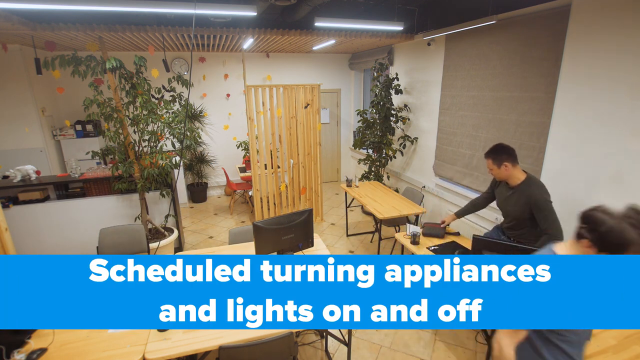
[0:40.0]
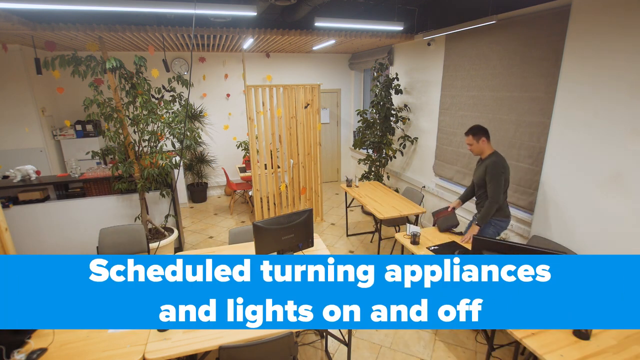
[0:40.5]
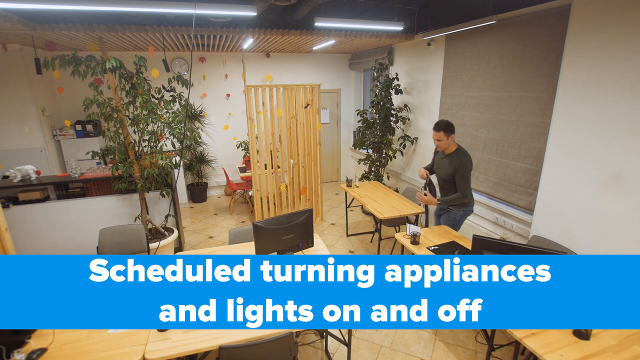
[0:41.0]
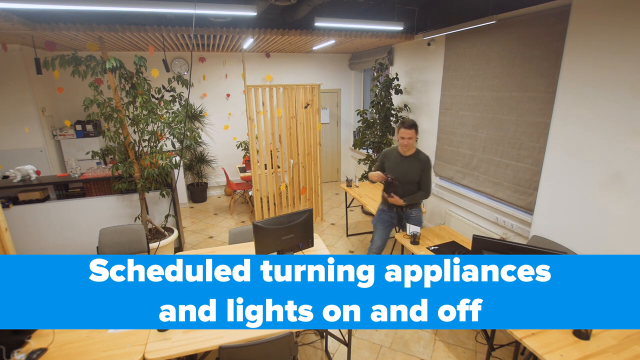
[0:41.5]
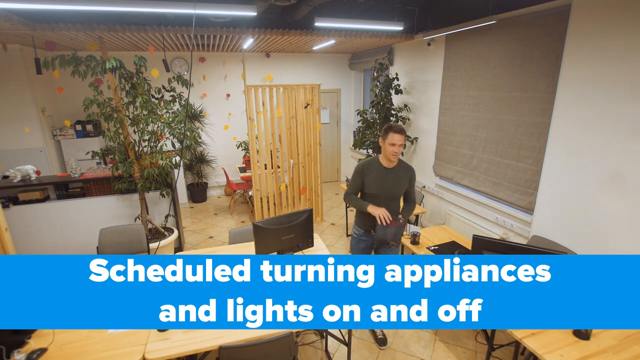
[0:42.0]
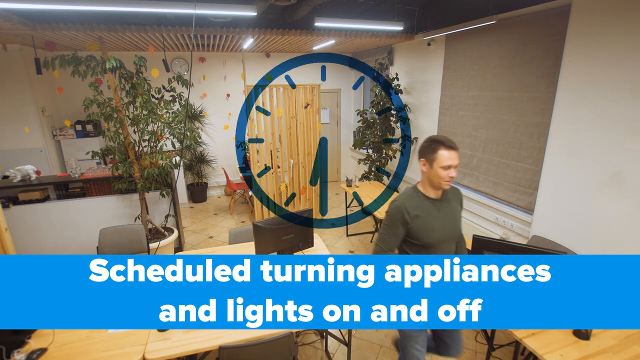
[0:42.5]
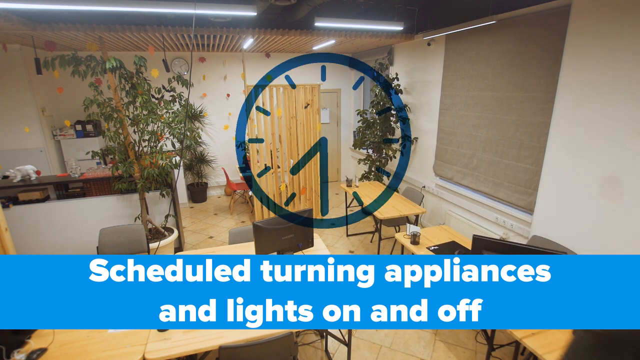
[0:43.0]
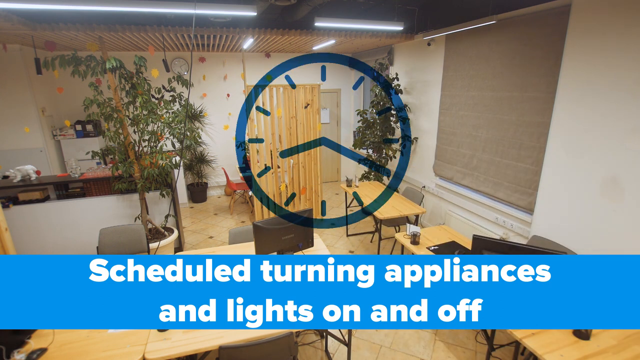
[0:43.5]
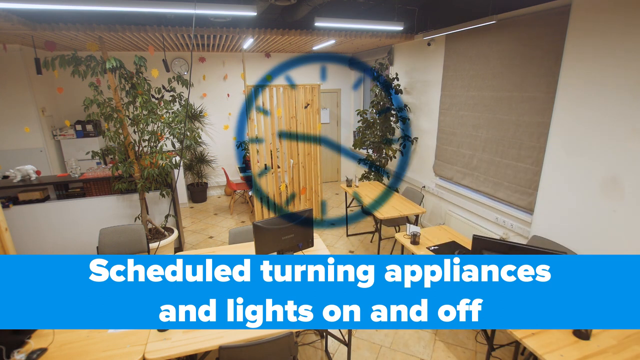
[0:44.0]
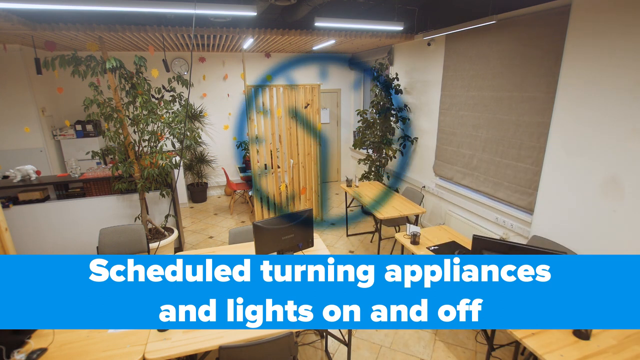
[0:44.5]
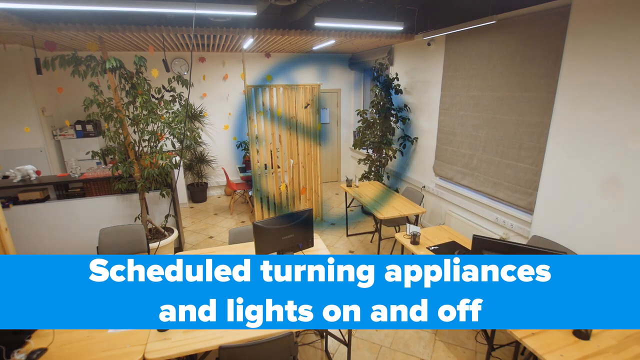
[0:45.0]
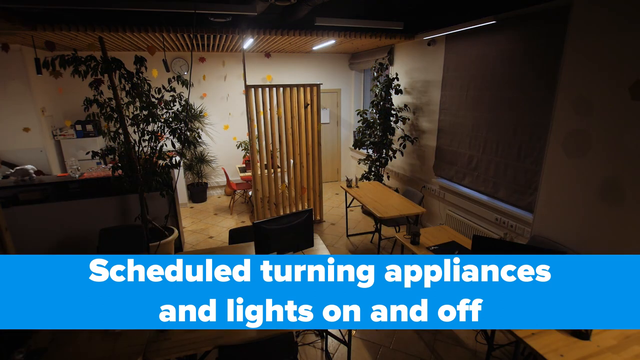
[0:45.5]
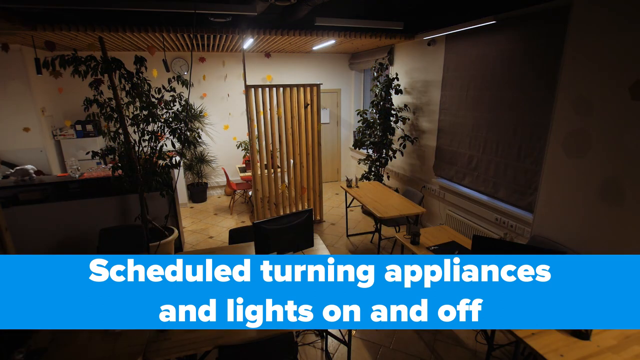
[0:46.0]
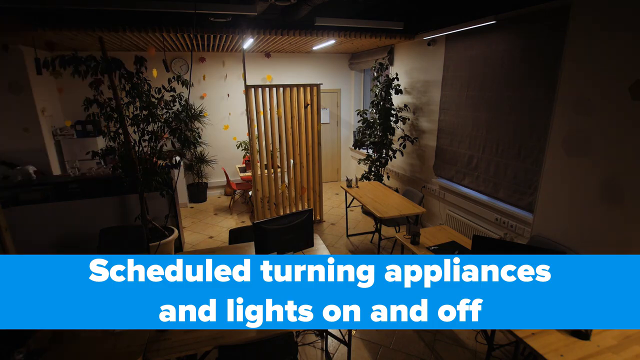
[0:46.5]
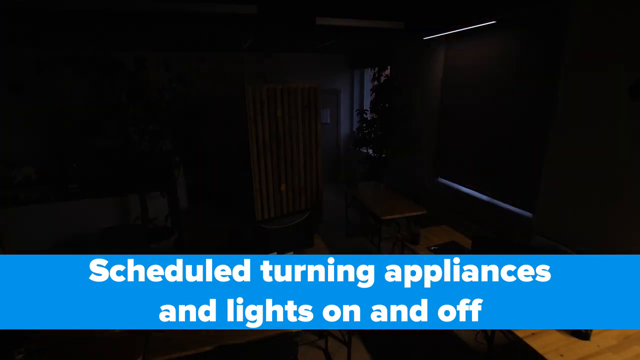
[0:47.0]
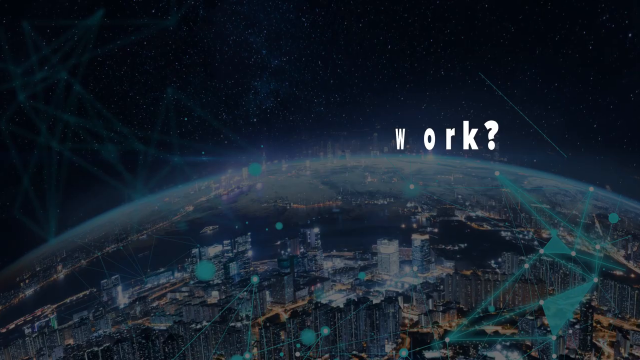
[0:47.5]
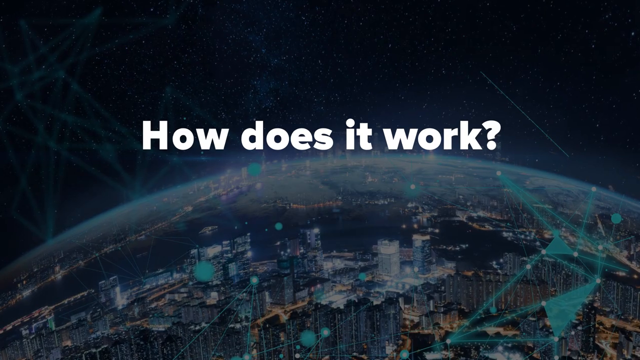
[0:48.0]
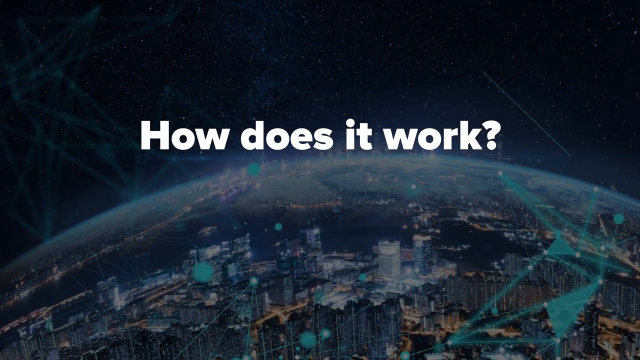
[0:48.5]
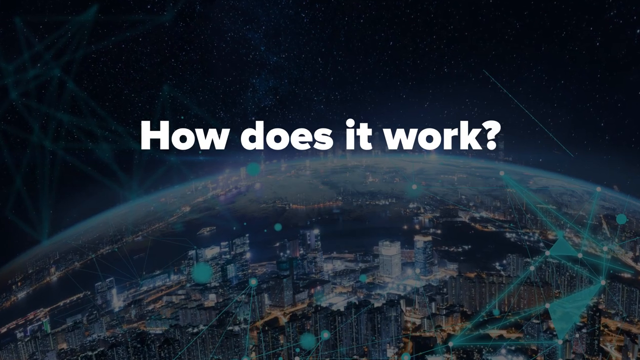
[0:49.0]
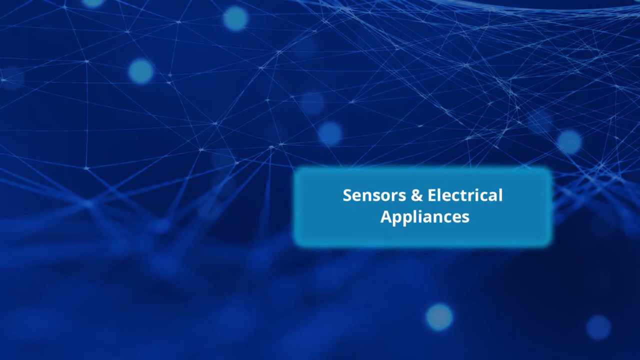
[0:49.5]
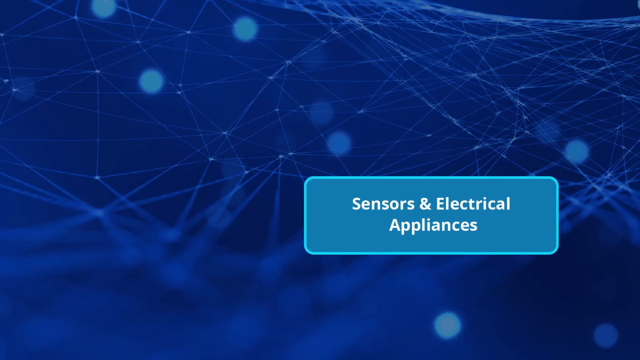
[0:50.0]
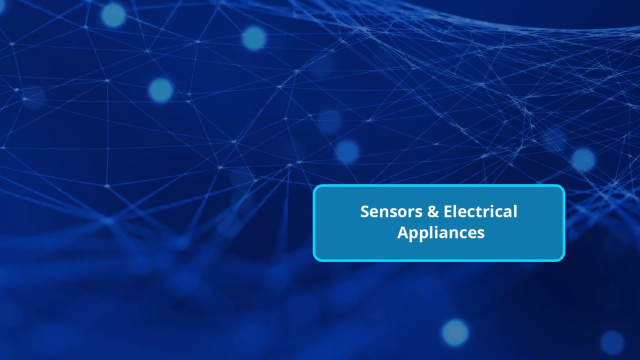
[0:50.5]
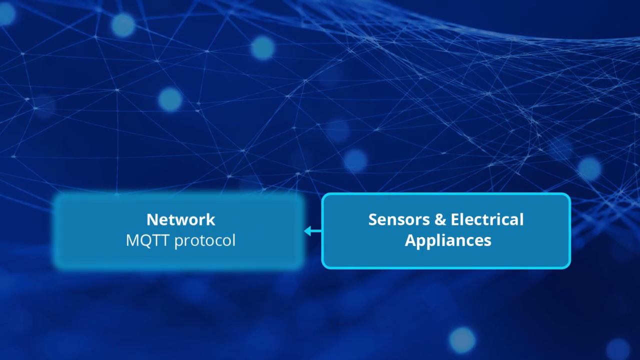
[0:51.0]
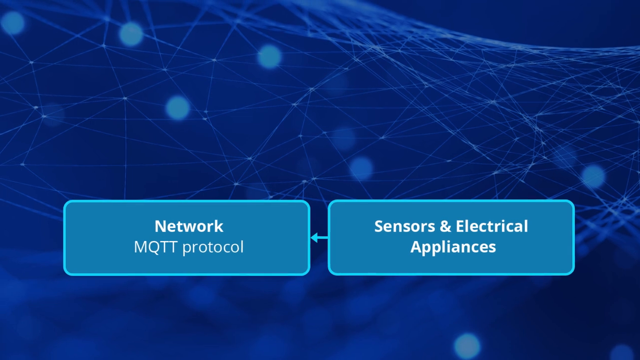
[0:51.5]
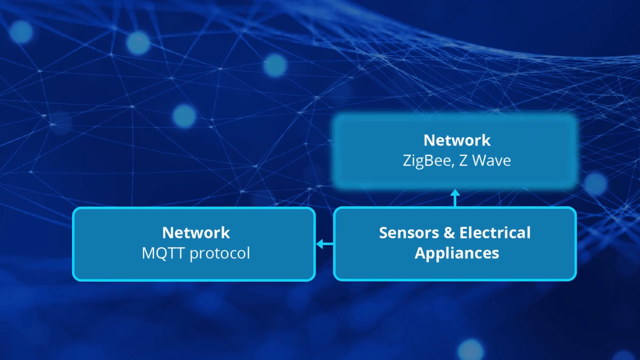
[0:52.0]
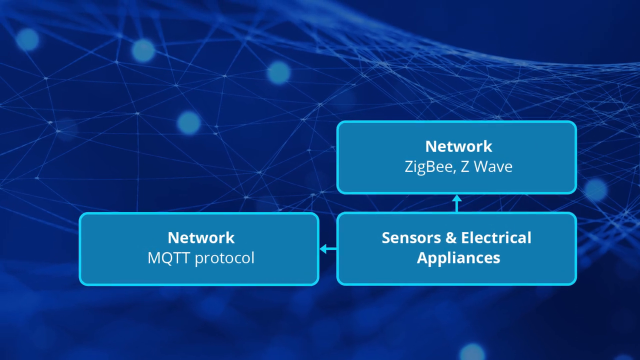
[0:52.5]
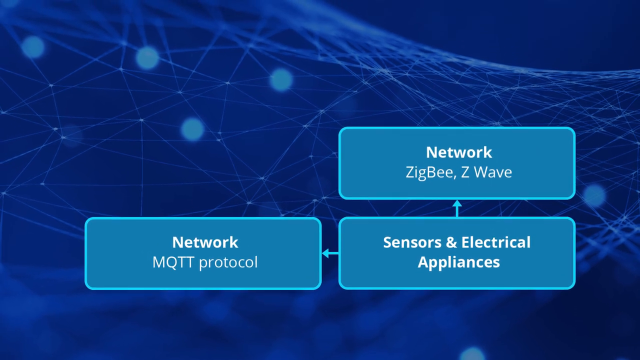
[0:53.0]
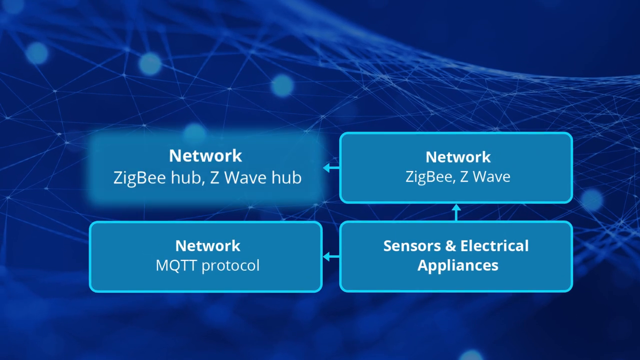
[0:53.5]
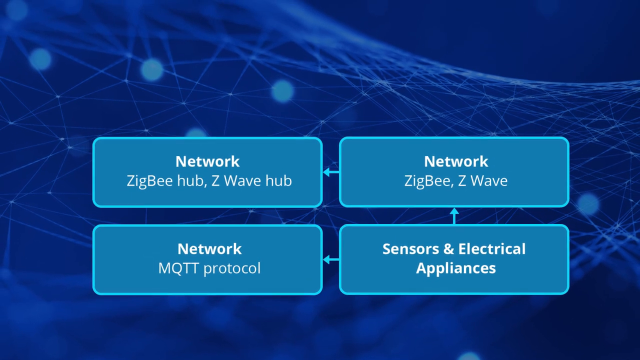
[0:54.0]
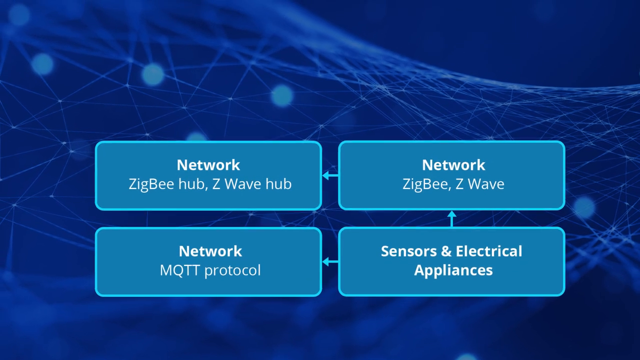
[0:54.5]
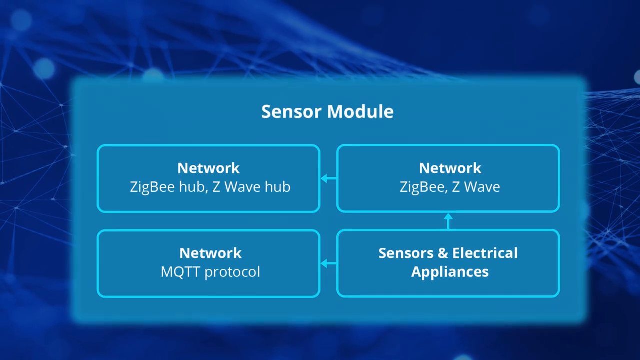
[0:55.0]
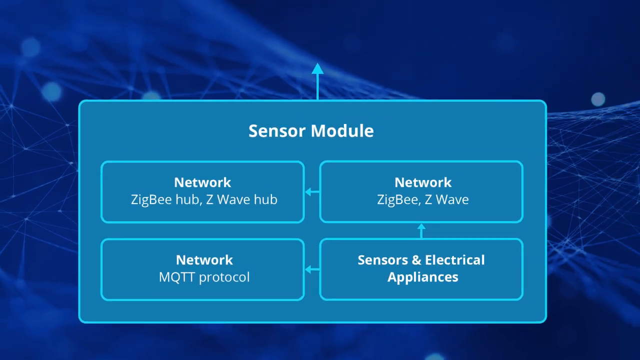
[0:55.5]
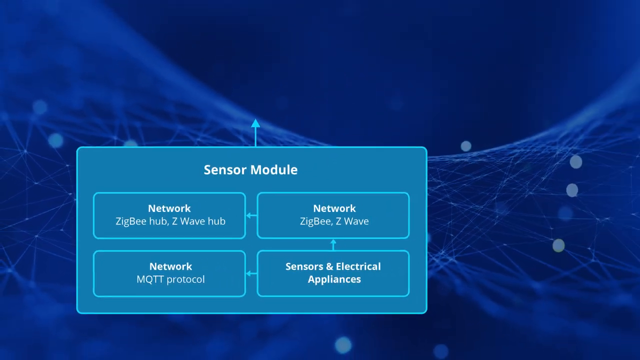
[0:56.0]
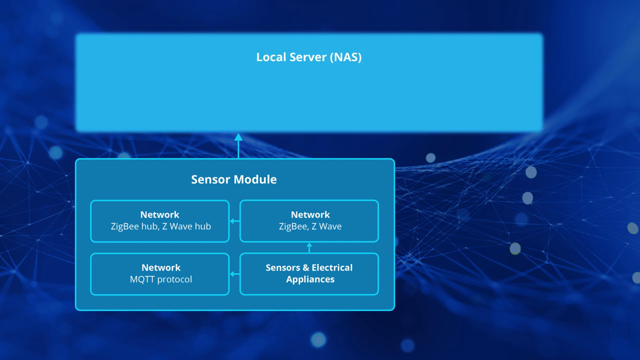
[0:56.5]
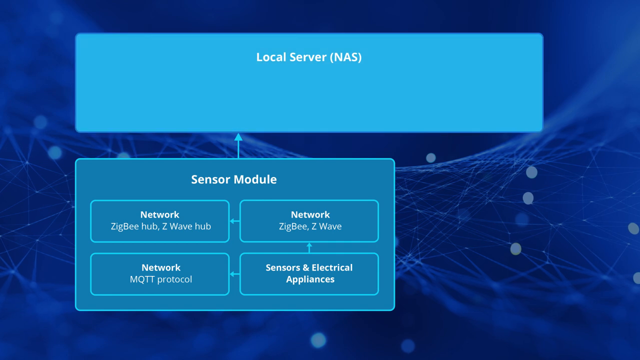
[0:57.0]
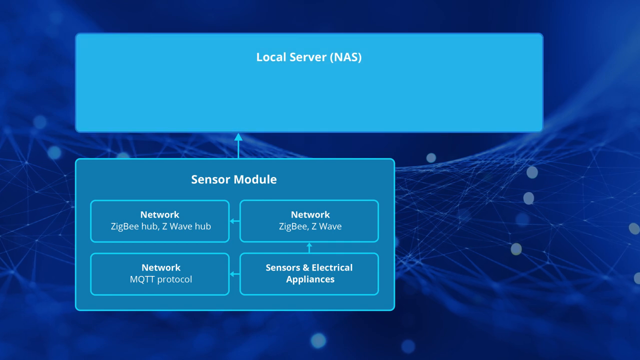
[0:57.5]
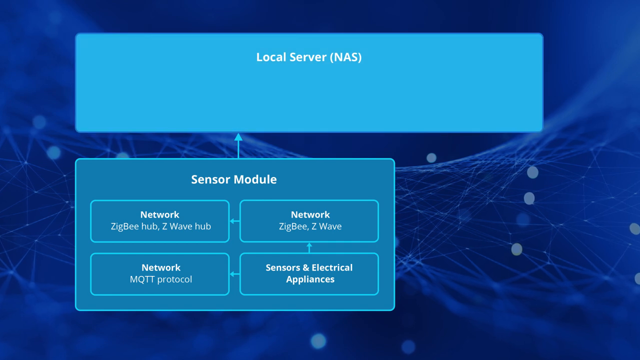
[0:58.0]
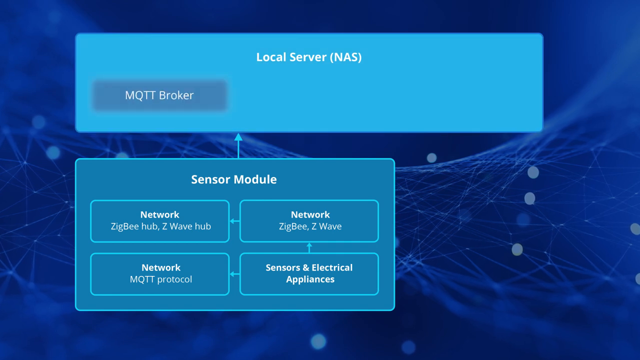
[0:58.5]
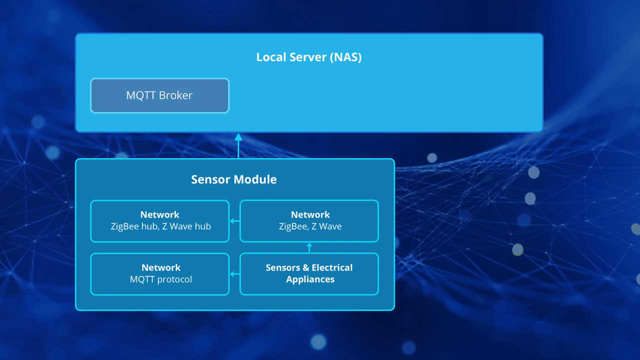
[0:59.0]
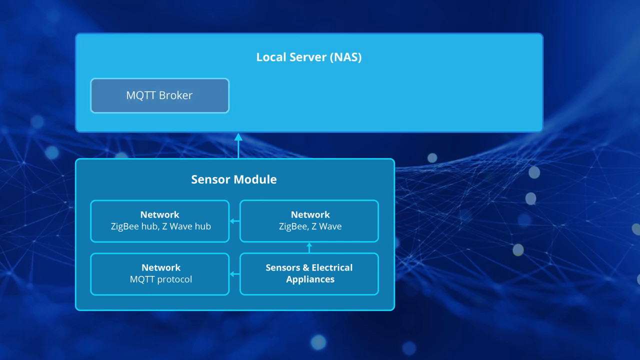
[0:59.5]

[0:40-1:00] The scene shows the inside of what looks like an office space, with white text at the bottom of the screen reading "scheduled turning appliances and lights on and off." A man in a sweatshirt and blue jeans gets up from his desk and leaves. An analog clock is overlaid, ticking, its hands going around clockwise. The clock disappears, and most of the lights in the room turn off; the few lights still on then turn off as well, apparently gradually, until the room is dark. White text then appears on the screen reading "how does it work?" over a background graphic that looks like a bunch of nodes connected by lines. Blue text in the middle front reads "sensors and electrical appliances," and arrows go from that rectangle to other rectangles.